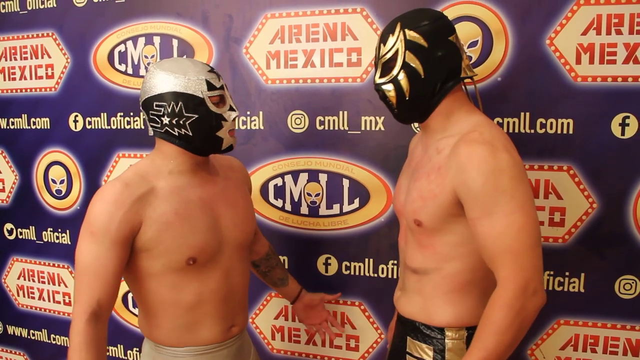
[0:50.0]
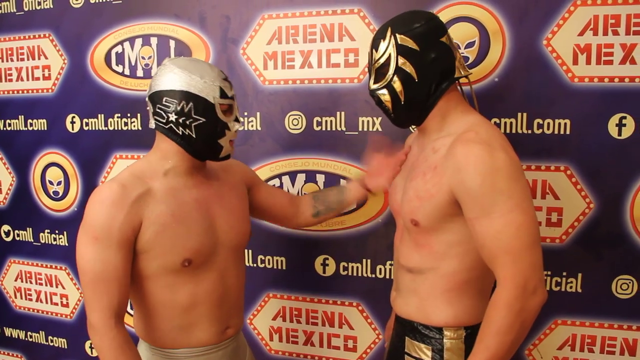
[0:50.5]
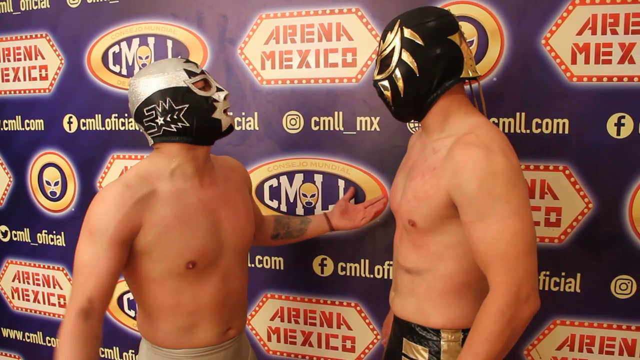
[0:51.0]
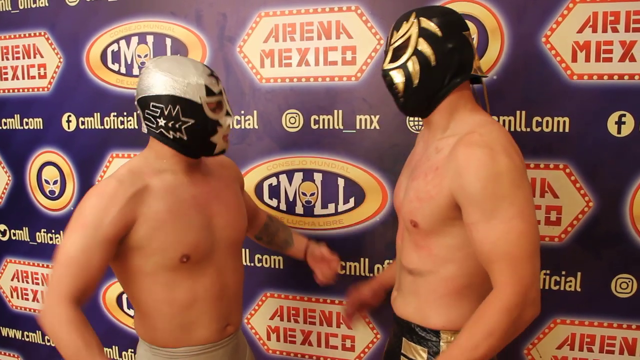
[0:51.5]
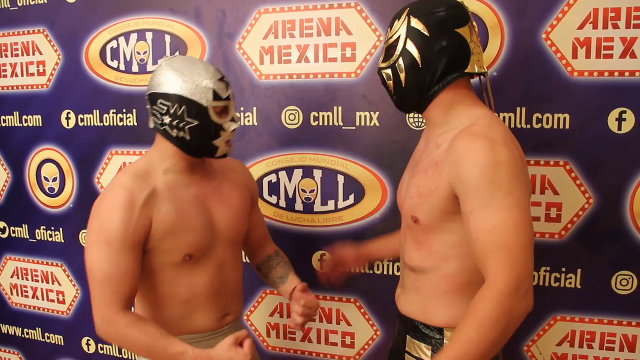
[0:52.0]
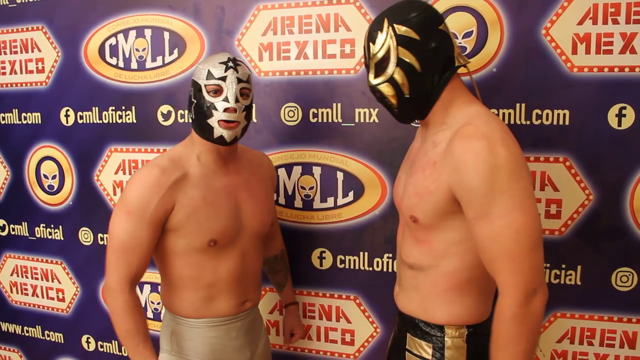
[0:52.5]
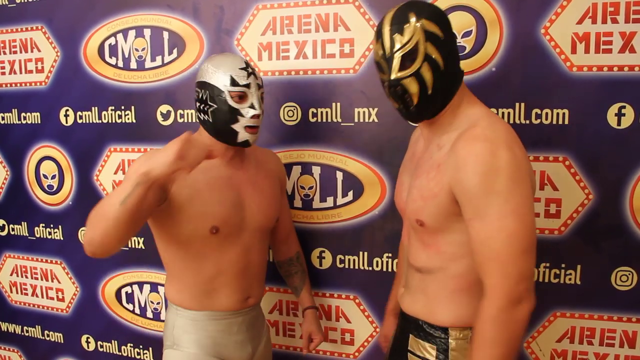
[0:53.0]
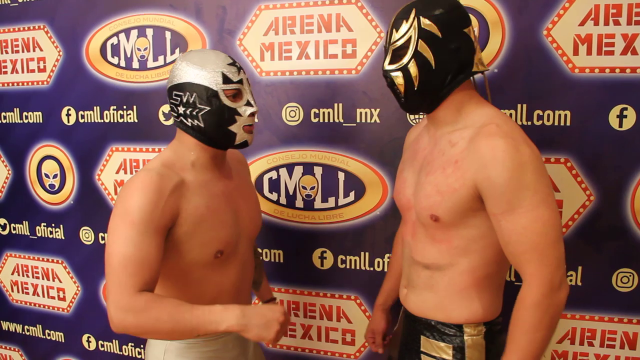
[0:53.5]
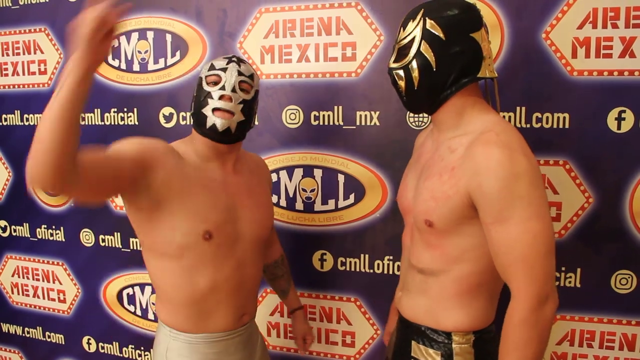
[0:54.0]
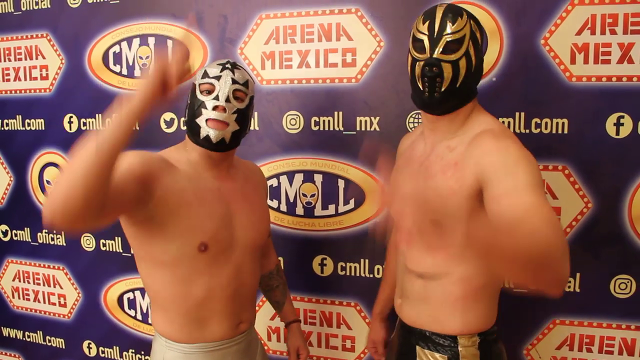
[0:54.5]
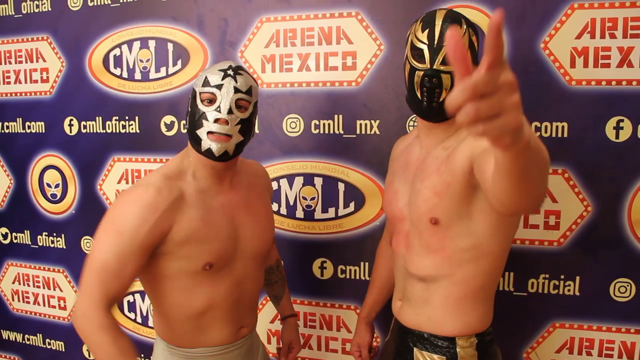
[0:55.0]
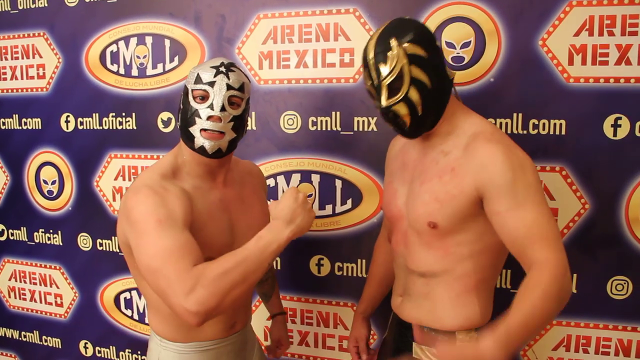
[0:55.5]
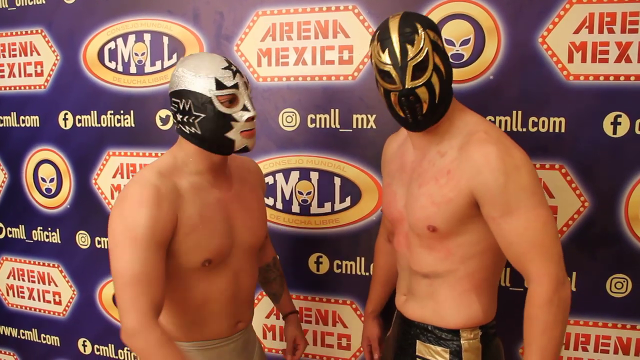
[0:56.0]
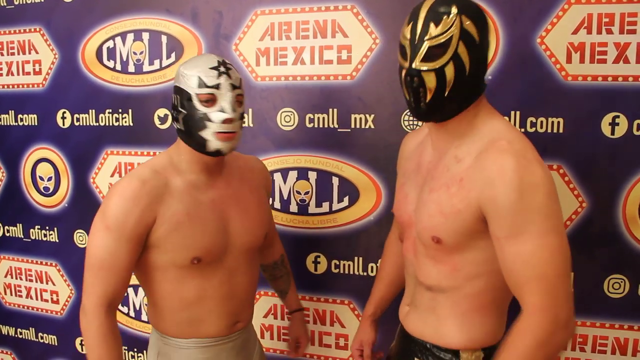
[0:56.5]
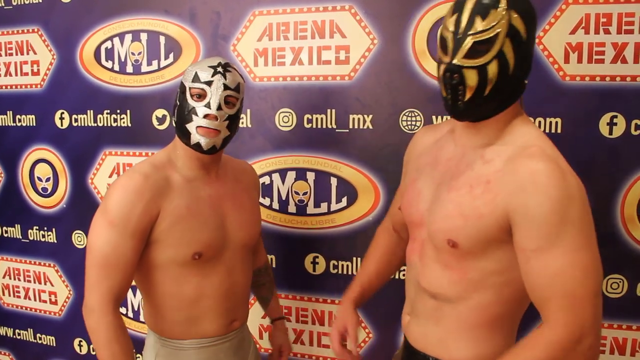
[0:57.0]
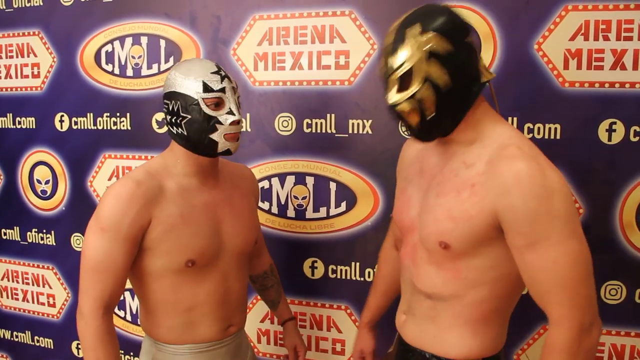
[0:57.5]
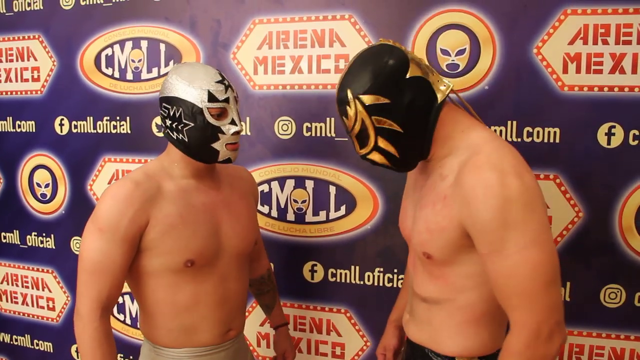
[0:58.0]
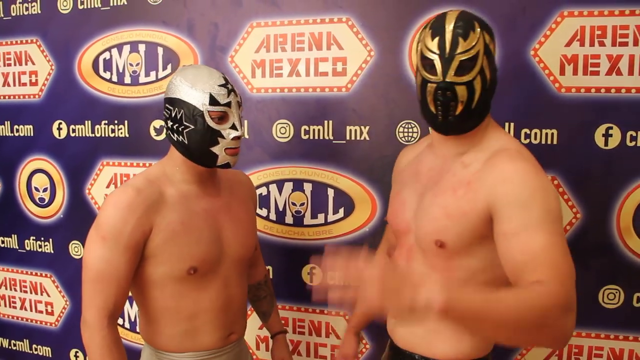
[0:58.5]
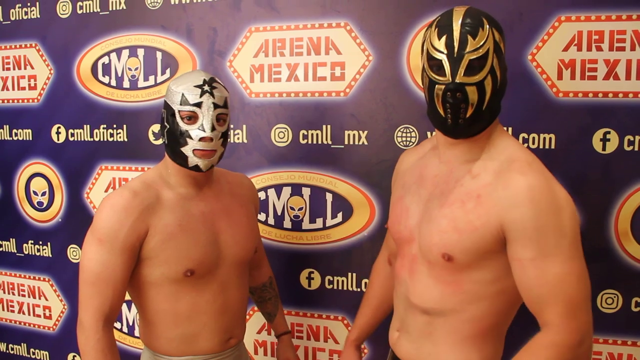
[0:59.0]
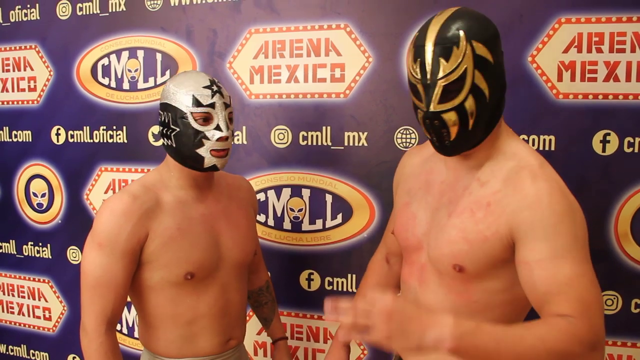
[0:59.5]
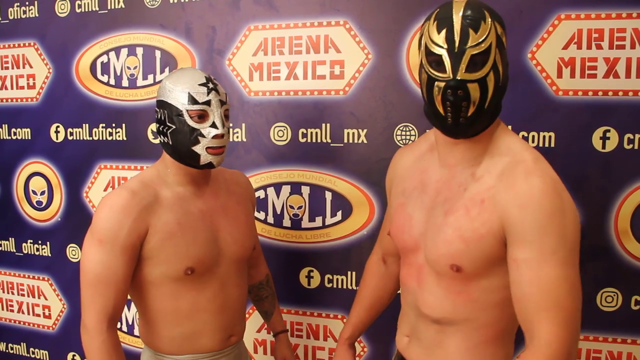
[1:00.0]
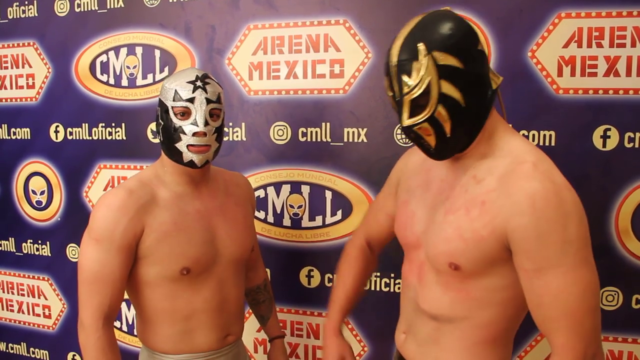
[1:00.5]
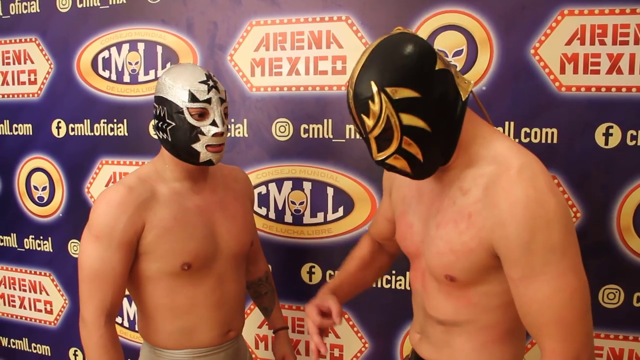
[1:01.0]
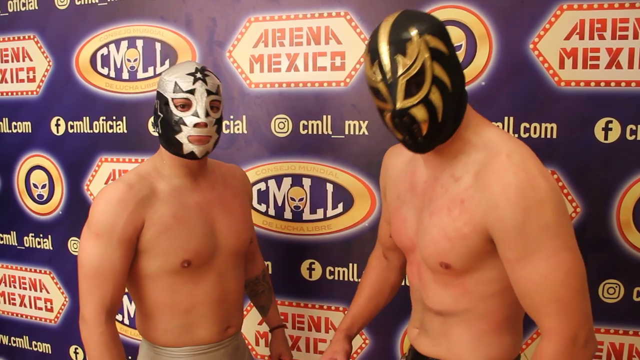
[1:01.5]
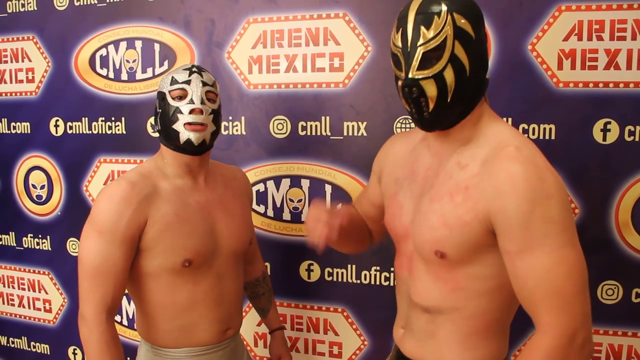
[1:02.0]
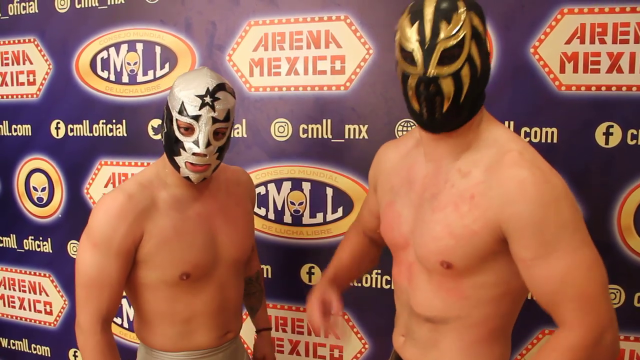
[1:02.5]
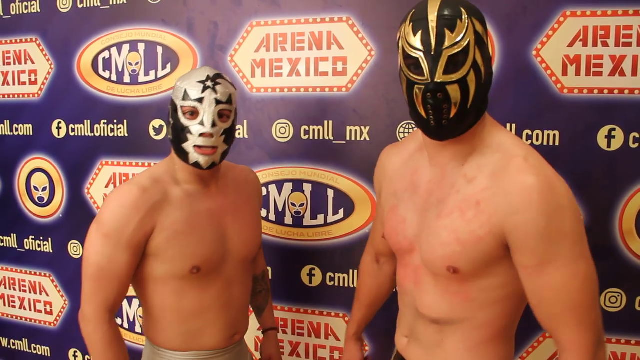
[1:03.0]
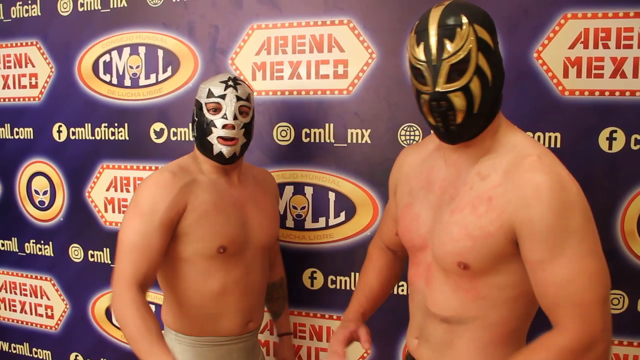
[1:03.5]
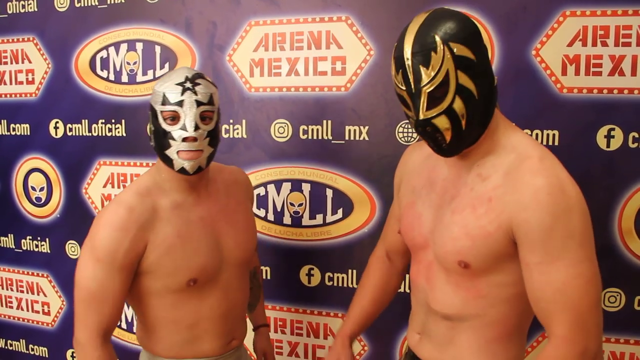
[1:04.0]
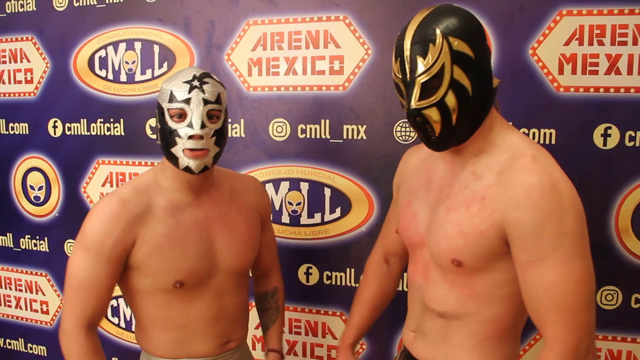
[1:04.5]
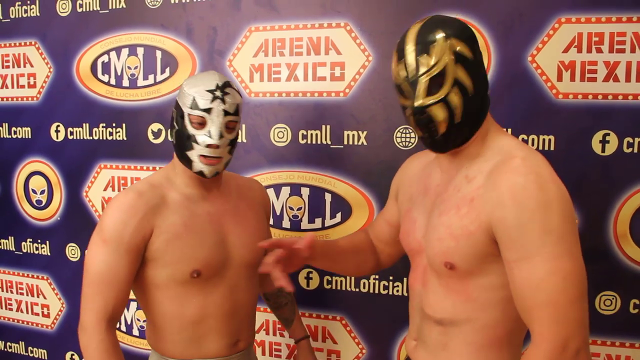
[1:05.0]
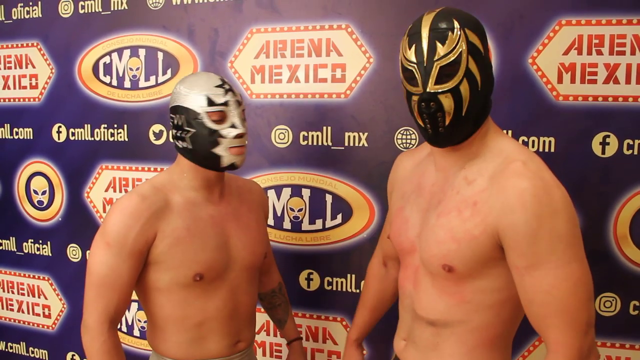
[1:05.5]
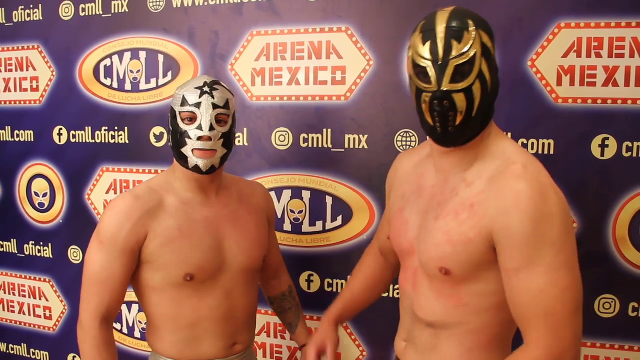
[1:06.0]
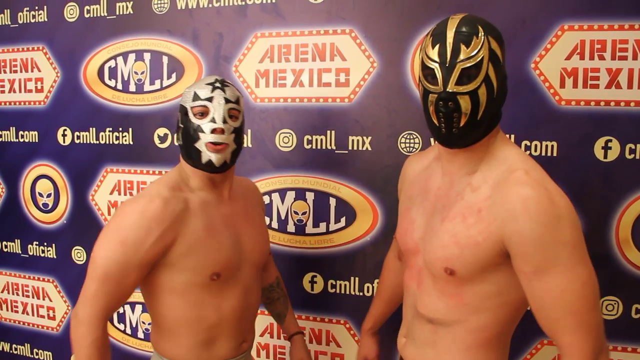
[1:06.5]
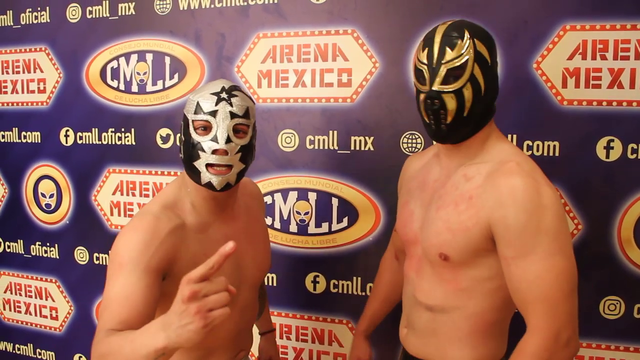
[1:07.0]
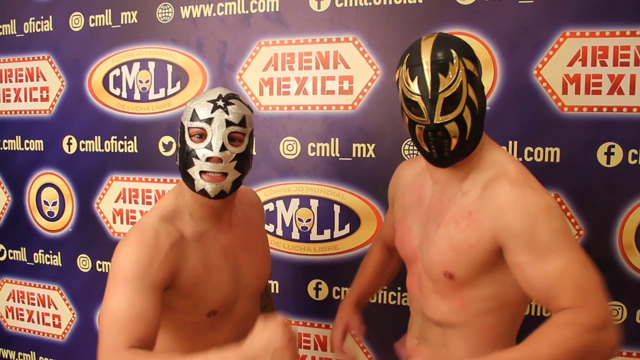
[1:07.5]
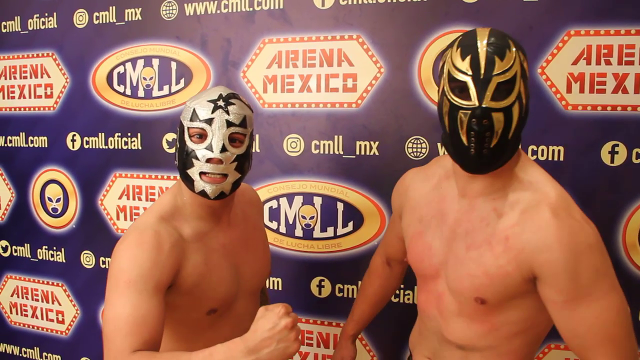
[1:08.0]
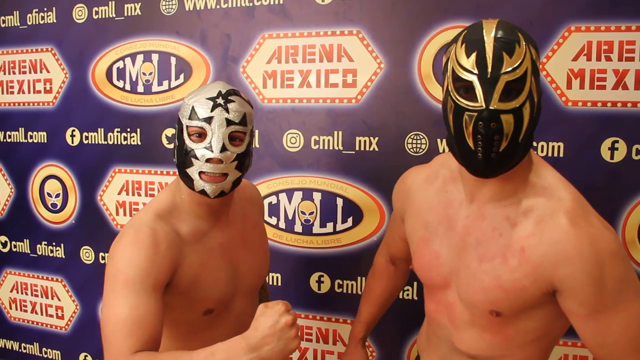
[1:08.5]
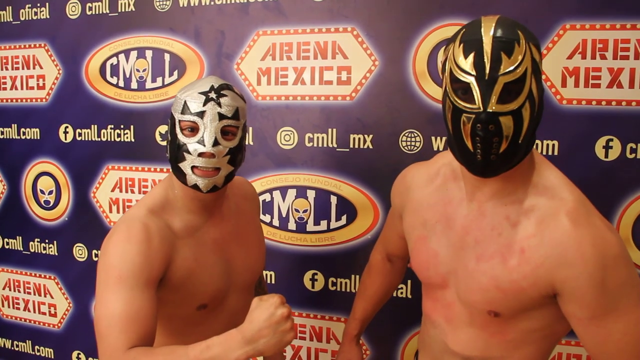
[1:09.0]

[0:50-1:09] The man in the white and black mask touches the other man on the chest, and the two seem to be hyping each other up. Both then face the camera while the cameraperson looks at and speaks to them. The men seem eager and ready, with a jovial, happy mood. For most of the scene both men look straight up at the camera rather than at each other, while still speaking to each other.